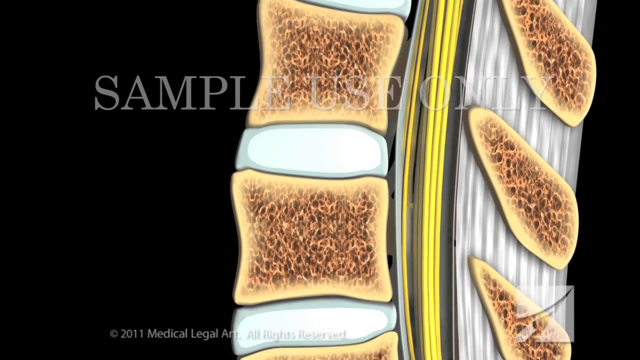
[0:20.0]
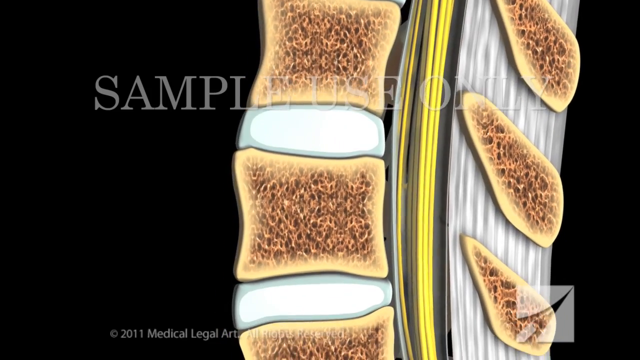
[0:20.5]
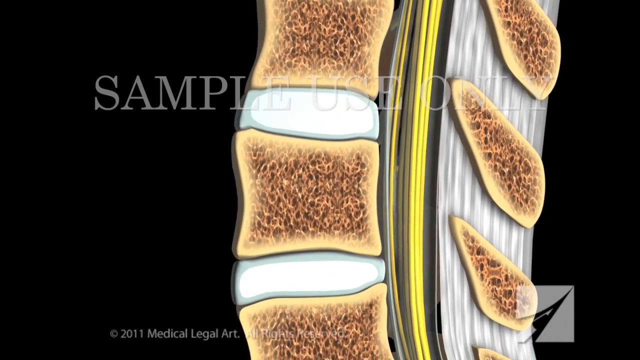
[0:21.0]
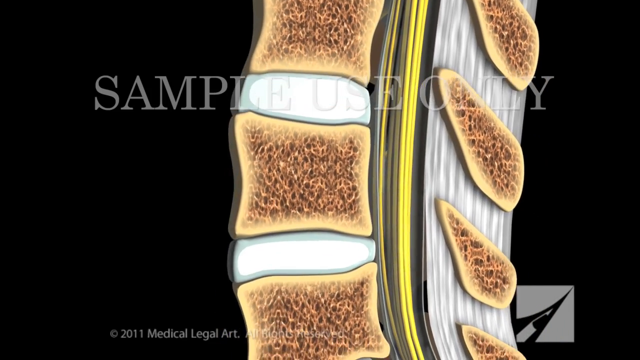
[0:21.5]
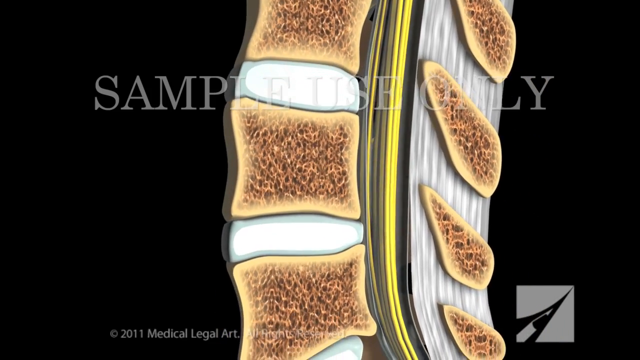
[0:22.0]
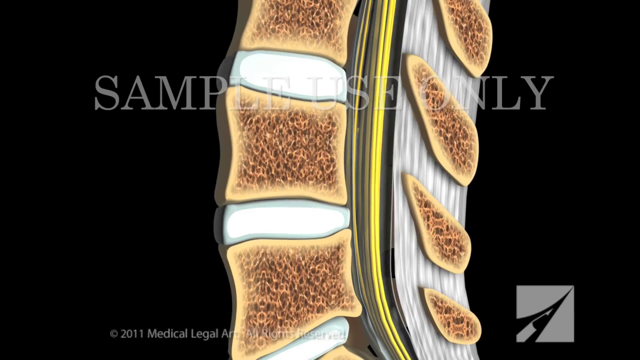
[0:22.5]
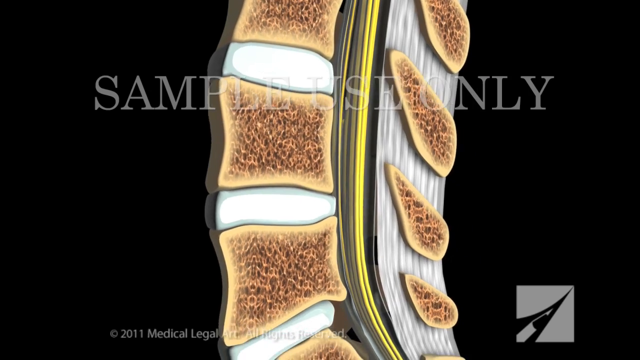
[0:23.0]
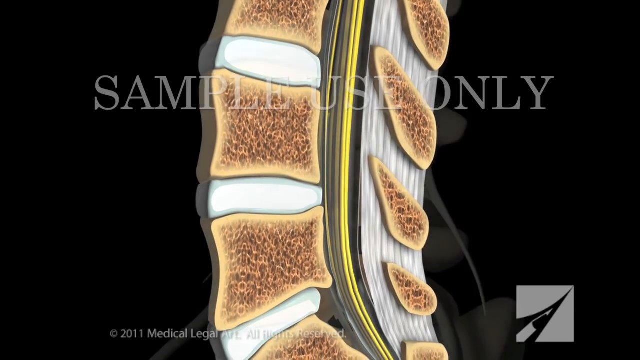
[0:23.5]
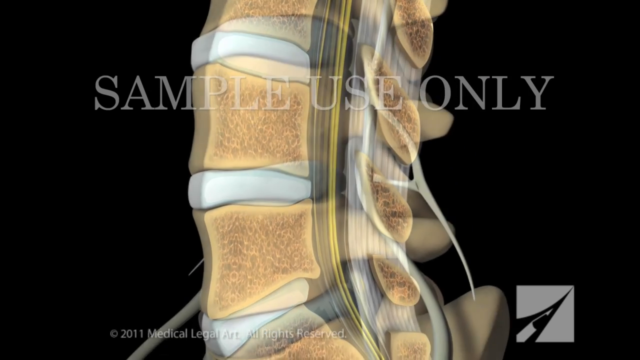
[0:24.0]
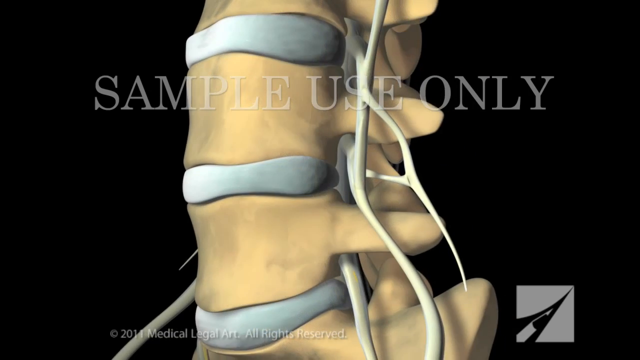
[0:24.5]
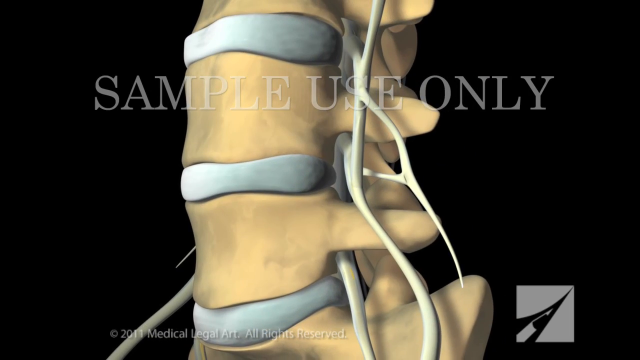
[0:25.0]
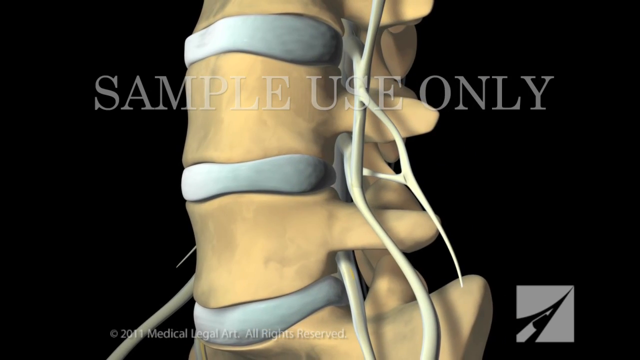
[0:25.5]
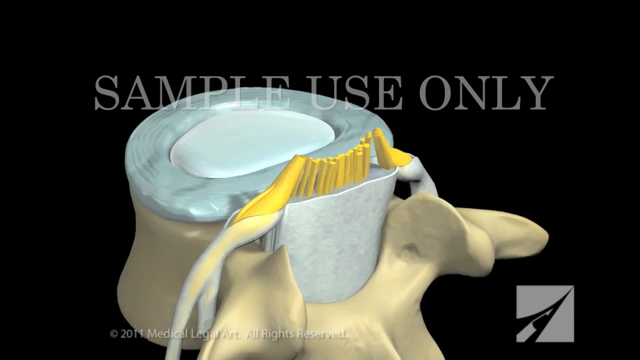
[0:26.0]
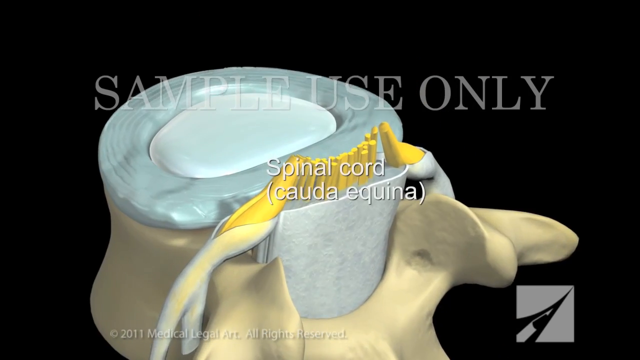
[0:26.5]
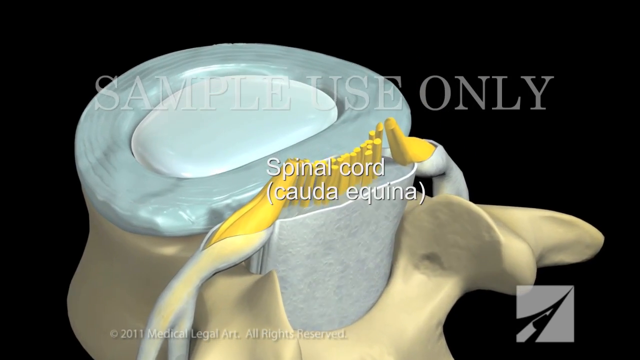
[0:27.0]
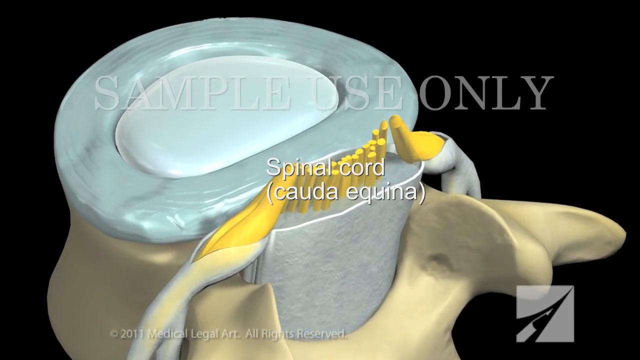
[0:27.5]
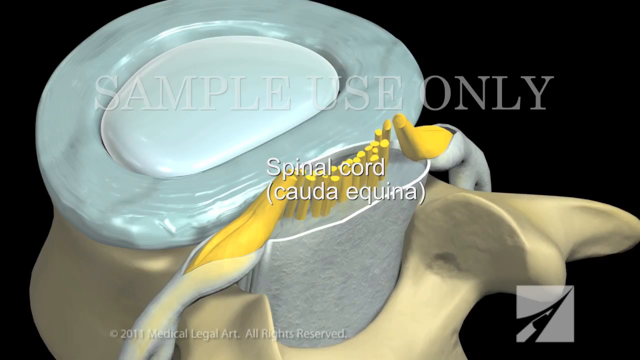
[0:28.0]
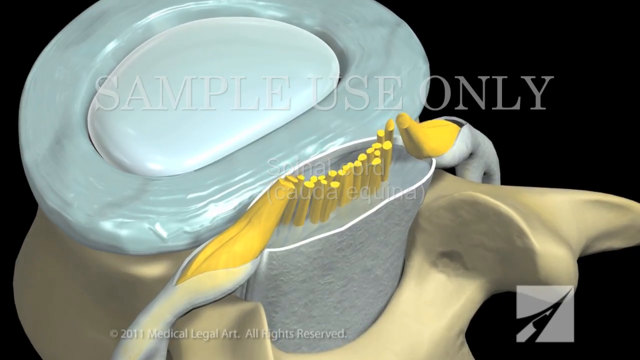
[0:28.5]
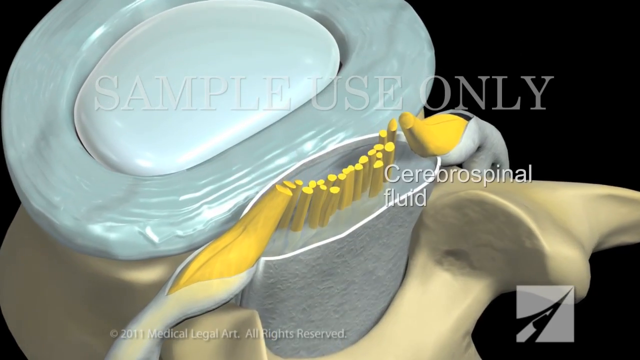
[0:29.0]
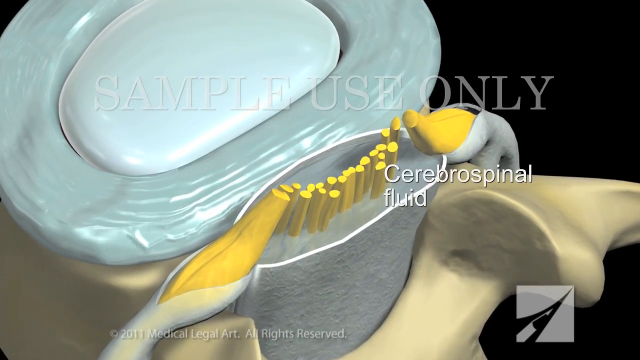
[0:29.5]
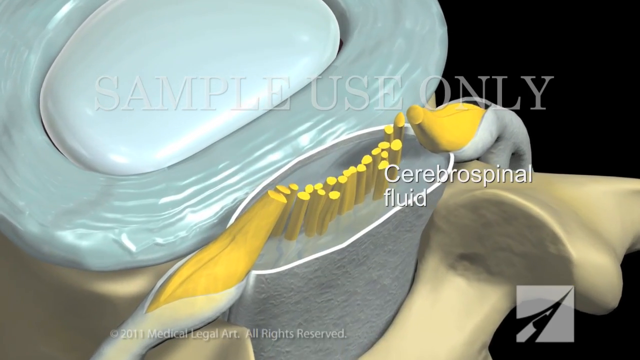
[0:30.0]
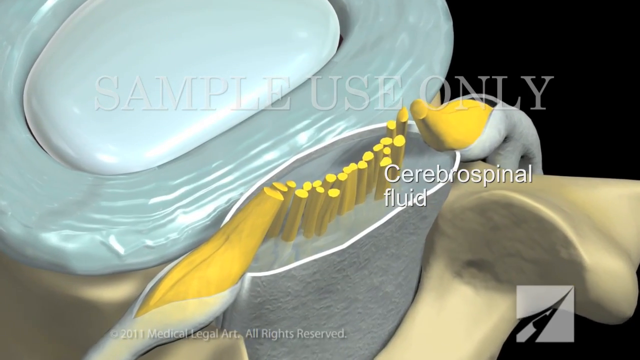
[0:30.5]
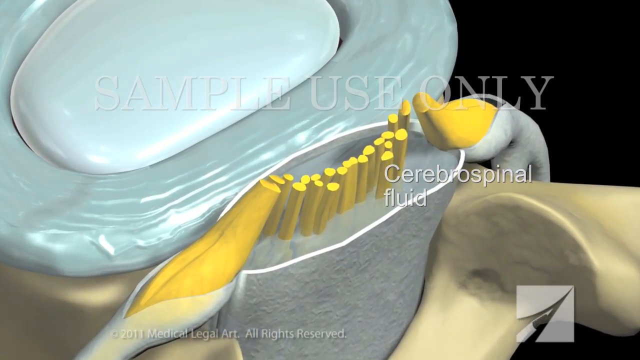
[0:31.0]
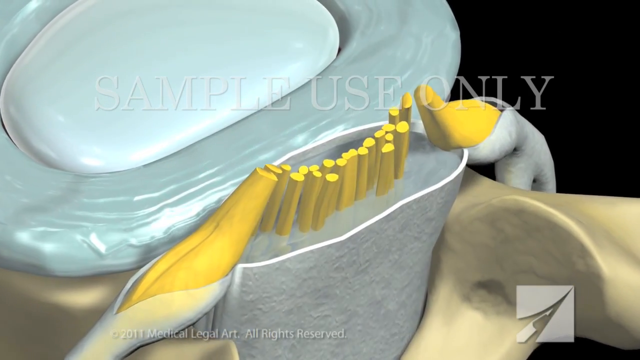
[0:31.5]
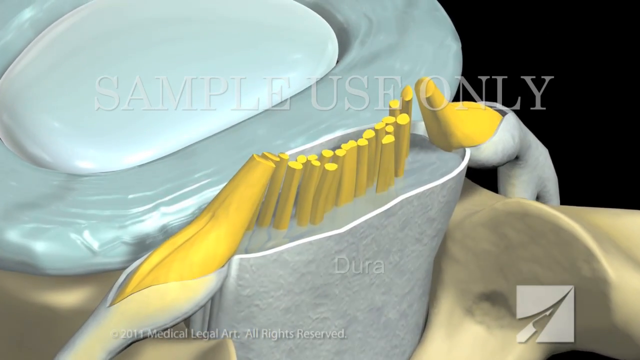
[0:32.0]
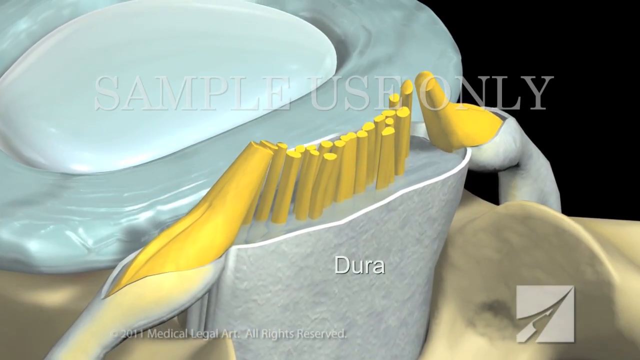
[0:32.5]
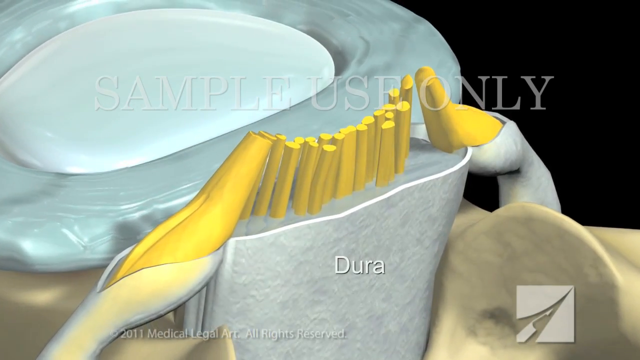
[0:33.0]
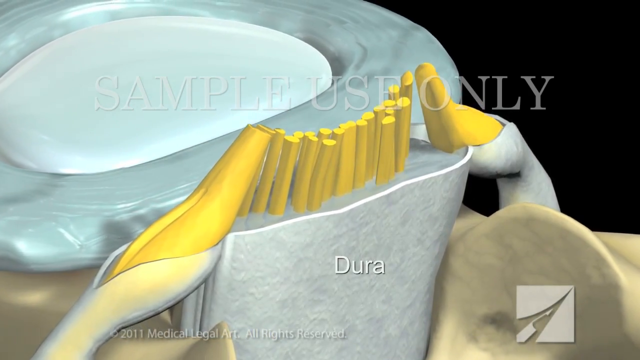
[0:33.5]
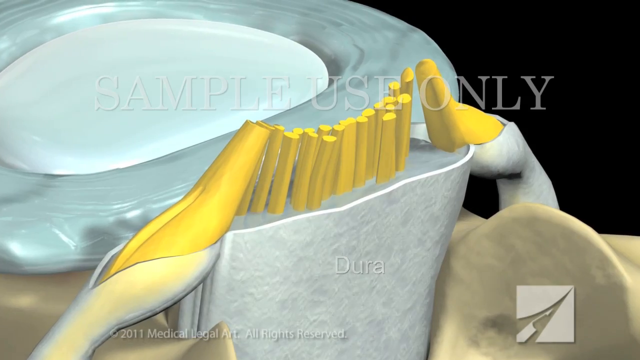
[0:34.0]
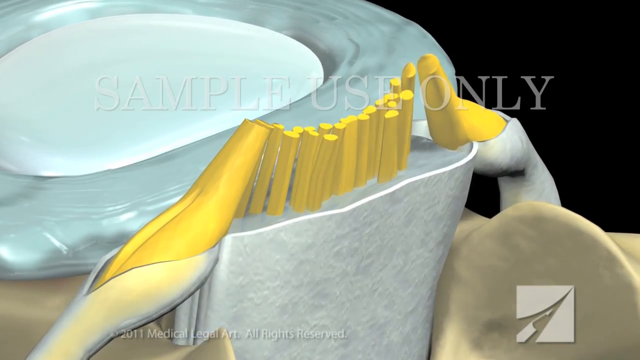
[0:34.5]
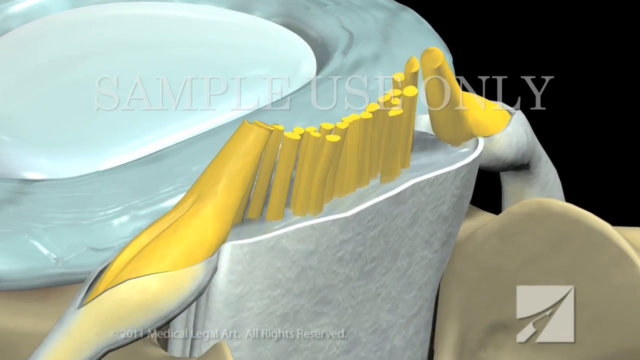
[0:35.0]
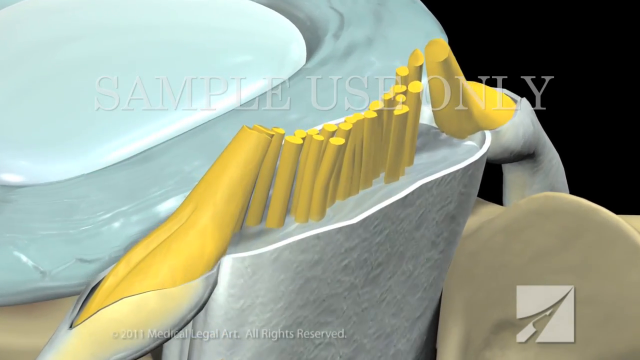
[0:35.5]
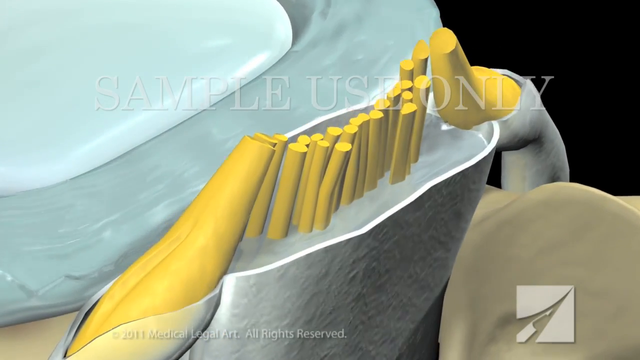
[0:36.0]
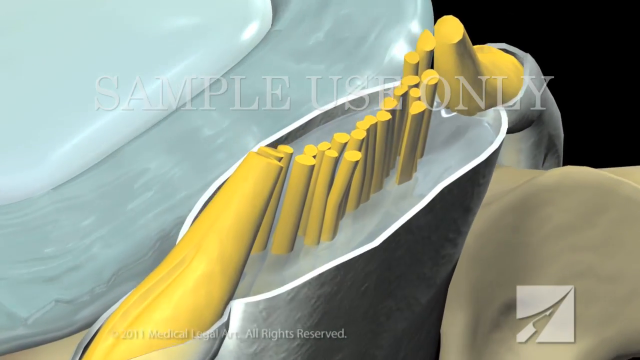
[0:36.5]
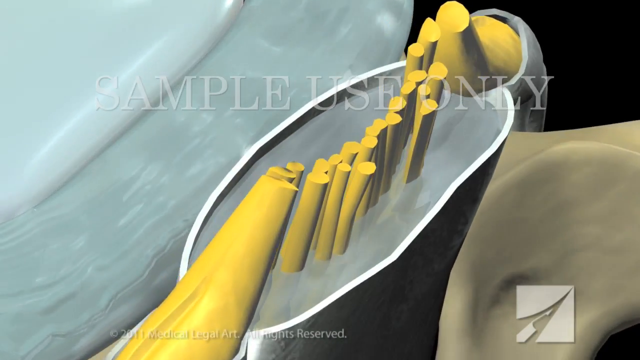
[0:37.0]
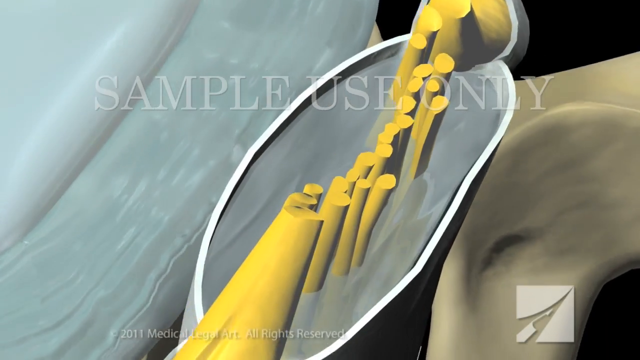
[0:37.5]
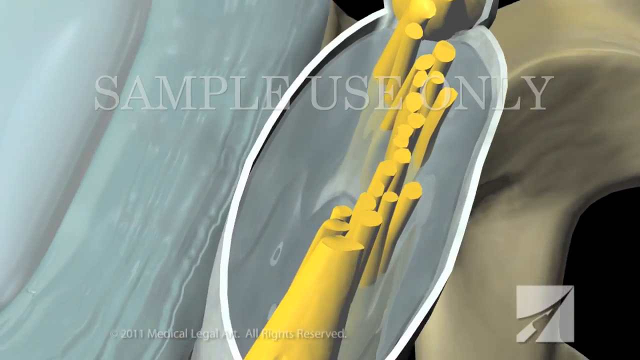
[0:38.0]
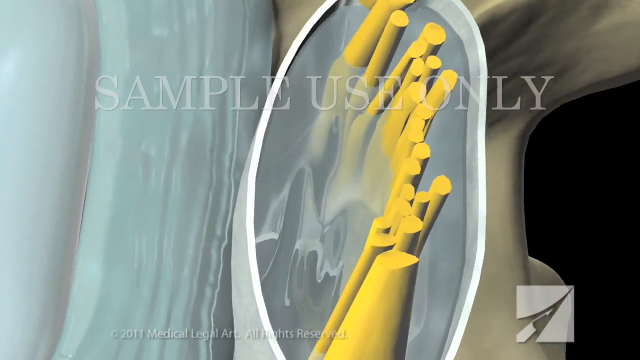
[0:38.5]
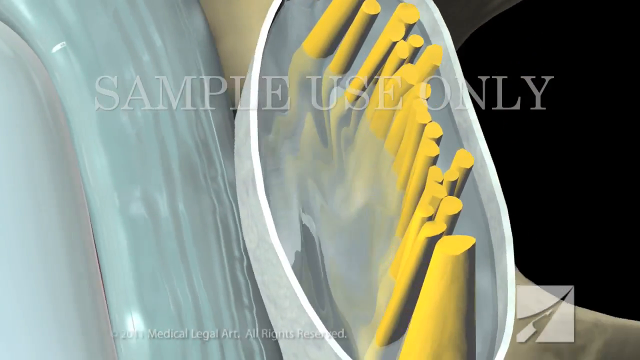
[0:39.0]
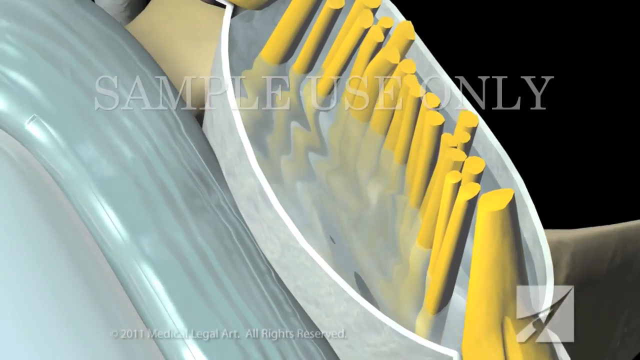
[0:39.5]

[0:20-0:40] A side view of the spine shows what the inside of each vertebra looks like: spongy. The vertebrae are an off-white cream tone with a brown spongy filling, and white cushioning lies between each vertebra. Between the vertebrae and their edge spikes, presumably nerve fibers, yellow in color, run vertically the length of the entire spine. Light gray text, more like a watermark, reads "sample use only" over the whole image. The view scrolls in for a close look at a vertebra, then pans out as the column turns from facing the left toward the right side of the image. The outside of the individual vertebrae is shown again, along with the cushioning between each one. The background is black, and a gray square that looks like some sort of emblem is at the bottom right. Alongside the spine, white nerve fibers run up and down and between the individual vertebrae, spiking out and in. Next comes a round cross section of the spinal cord, with a white filling inside and yellow nerve fibers coming up from the front of it. White text reads "spinal cord (cauda equina)." The cross section shows what the cord looks like when cut. The view pans in closer to the individual nerve fibers as it shifts and turns somewhat to the right, then comes full circle. An opaque white, gel-like liquid surrounds the nerve fibers and looks like it gives them significant cushioning and protection. The gray "sample use only" watermark remains over the whole image, and the square emblem at the bottom right fades somewhat out of view as the image comes closer to the viewer. In the cross section, the bone is circular in the middle, and at its very center is white tissue that looks somewhat similar to the cushioning between the vertebrae, almost like a buffer band. Each nerve is individually yellow and surrounded by the gel, and on the outside a sturdy-looking white membrane encloses everything; white text across it reads "dura." The background is black, and at the bottom text reads "copyright 2011."